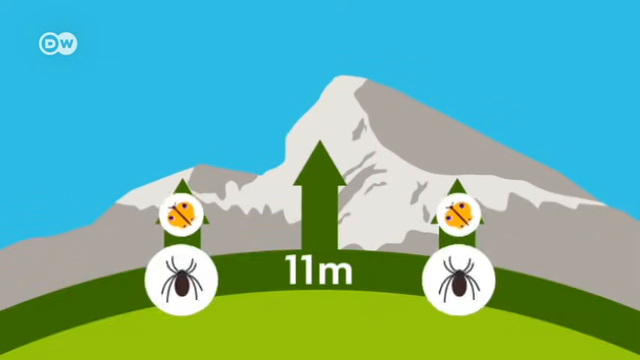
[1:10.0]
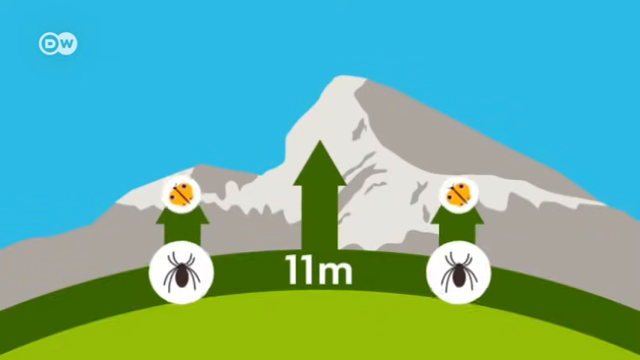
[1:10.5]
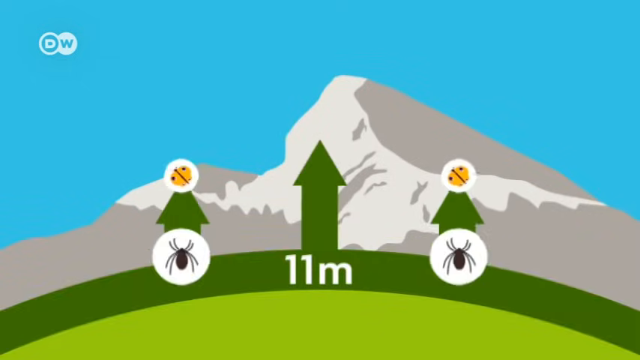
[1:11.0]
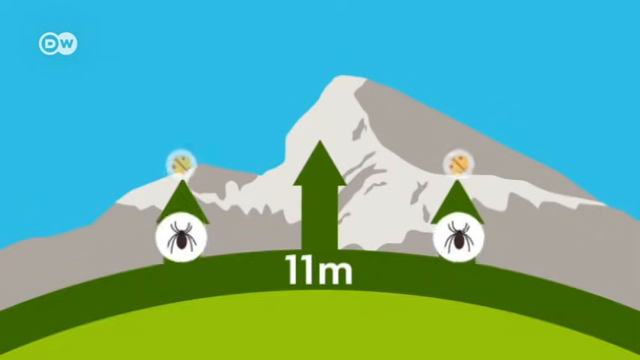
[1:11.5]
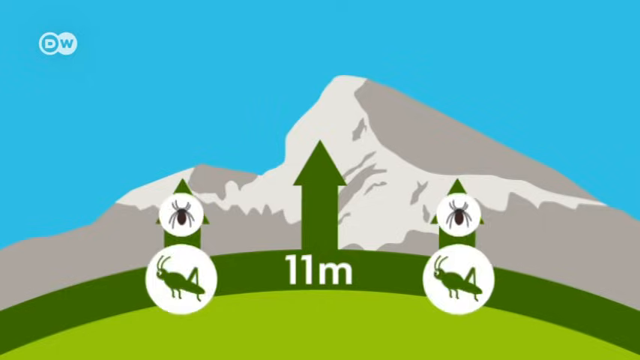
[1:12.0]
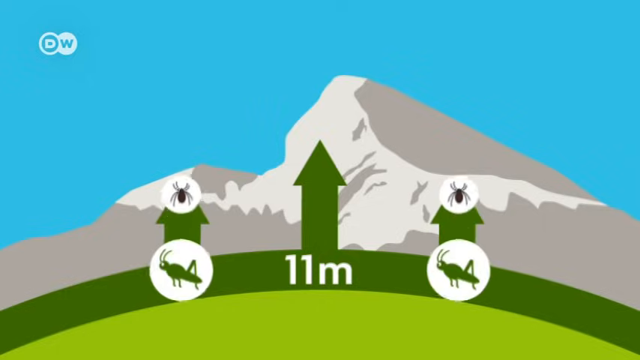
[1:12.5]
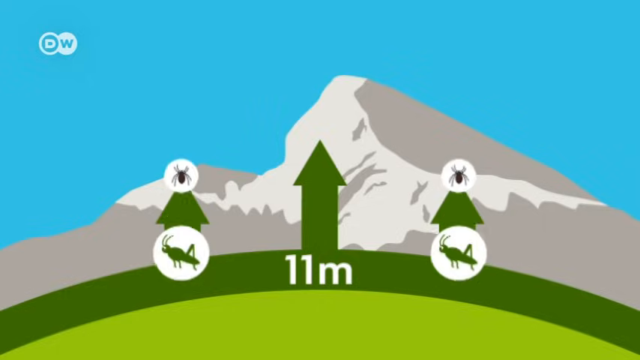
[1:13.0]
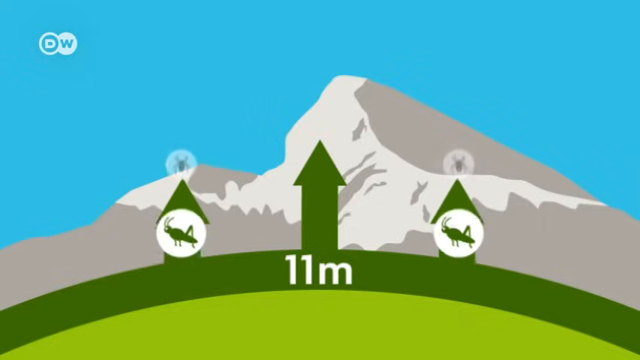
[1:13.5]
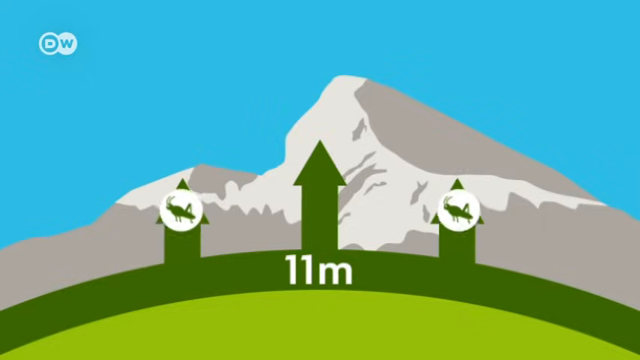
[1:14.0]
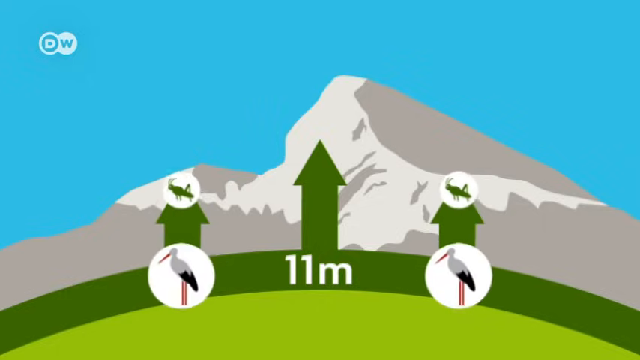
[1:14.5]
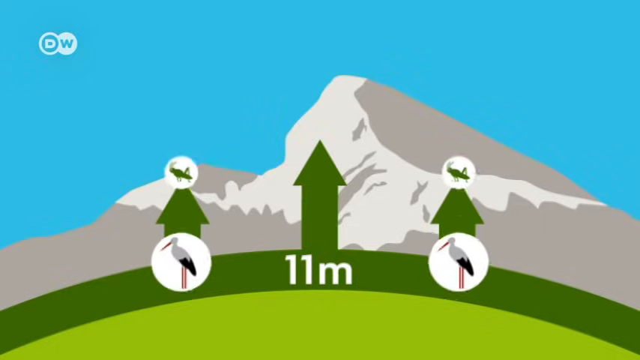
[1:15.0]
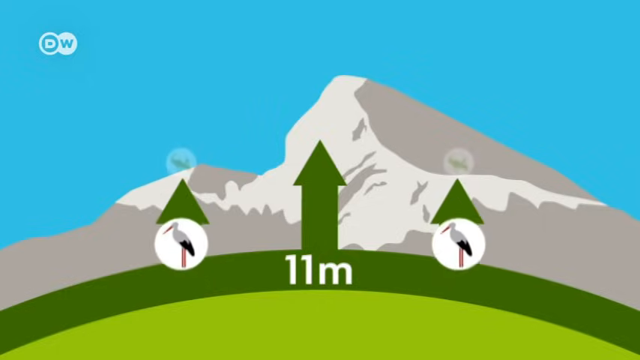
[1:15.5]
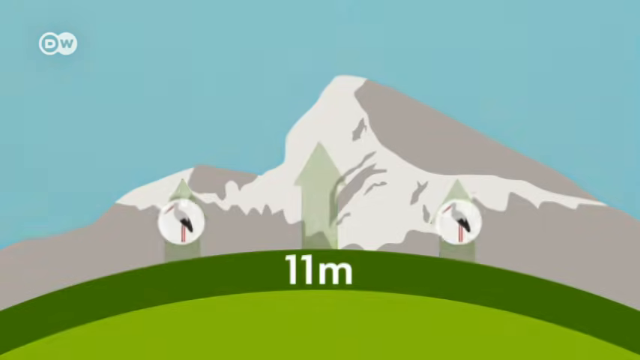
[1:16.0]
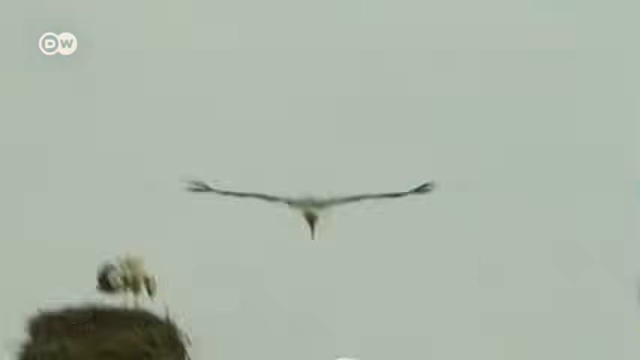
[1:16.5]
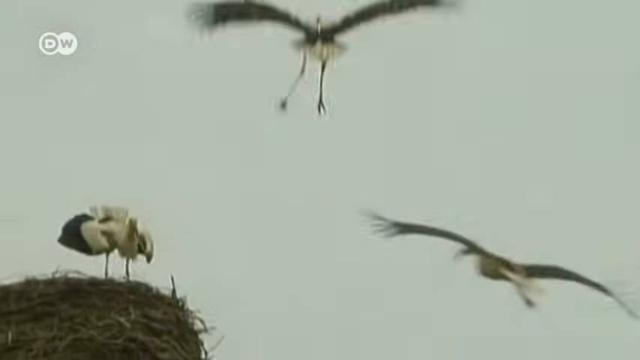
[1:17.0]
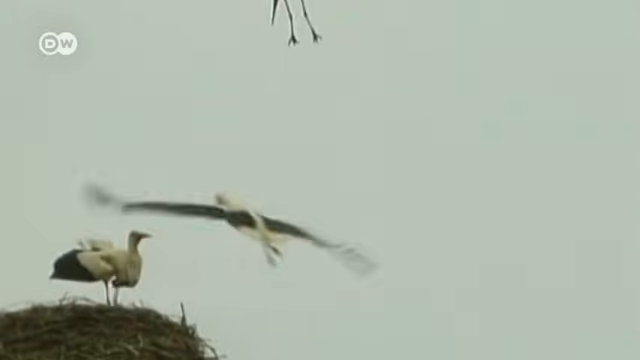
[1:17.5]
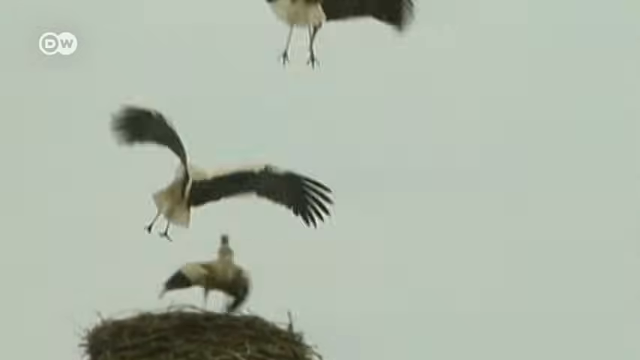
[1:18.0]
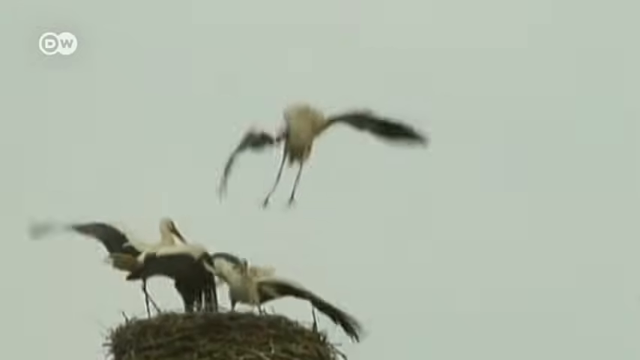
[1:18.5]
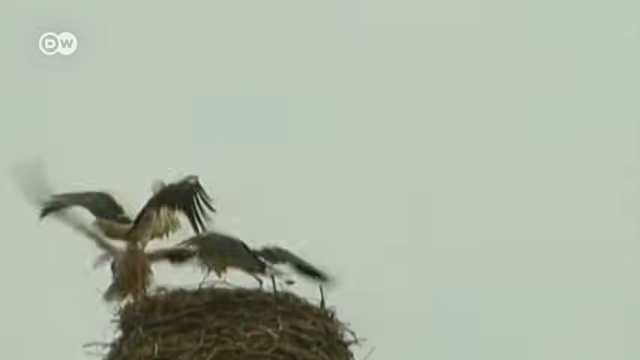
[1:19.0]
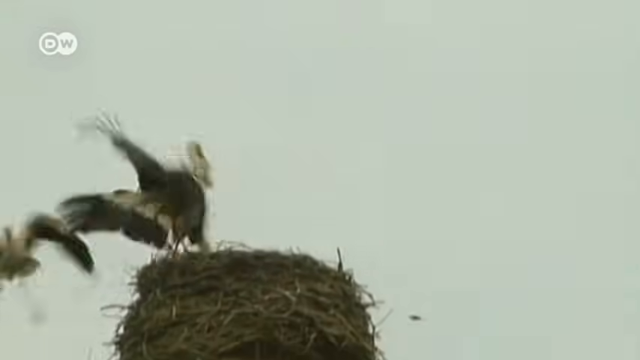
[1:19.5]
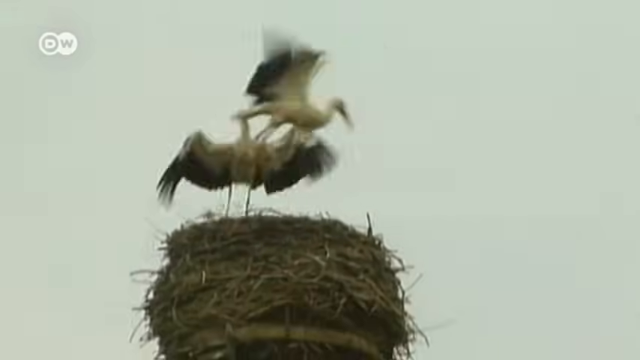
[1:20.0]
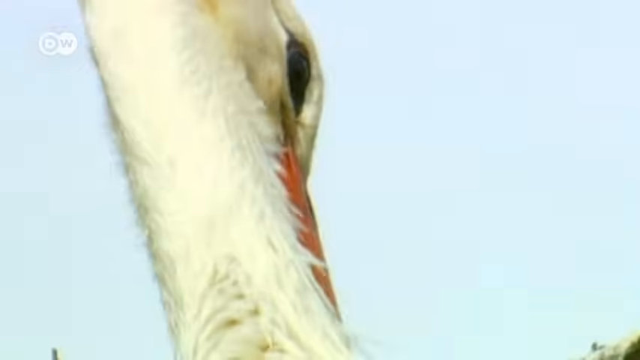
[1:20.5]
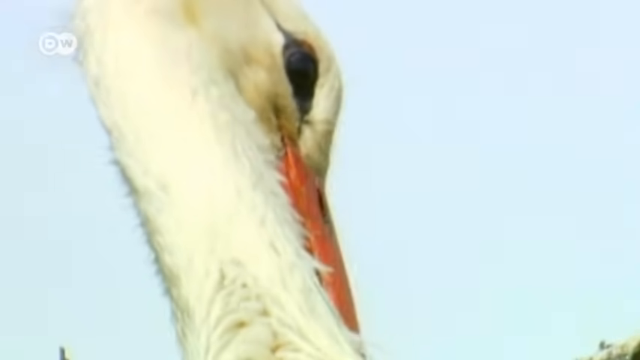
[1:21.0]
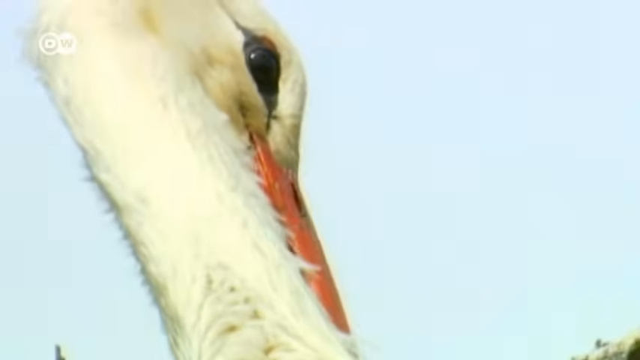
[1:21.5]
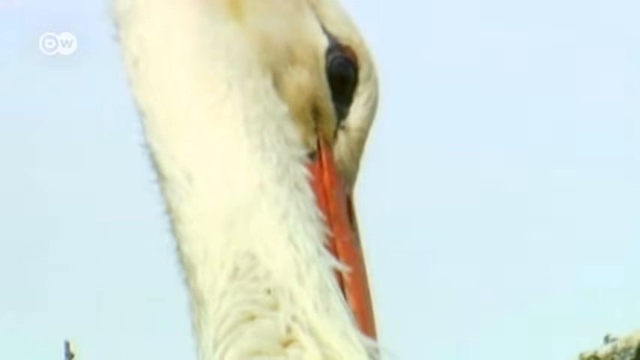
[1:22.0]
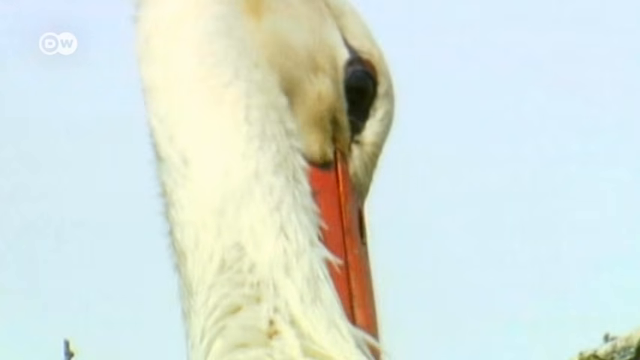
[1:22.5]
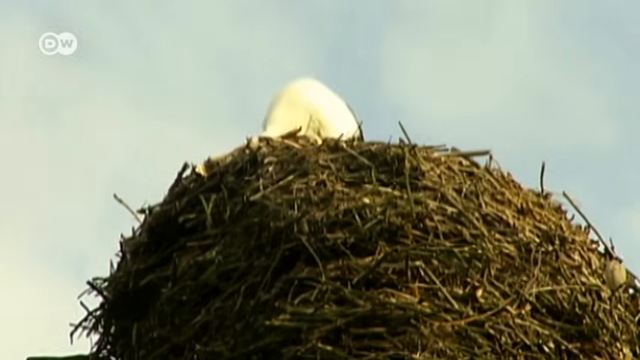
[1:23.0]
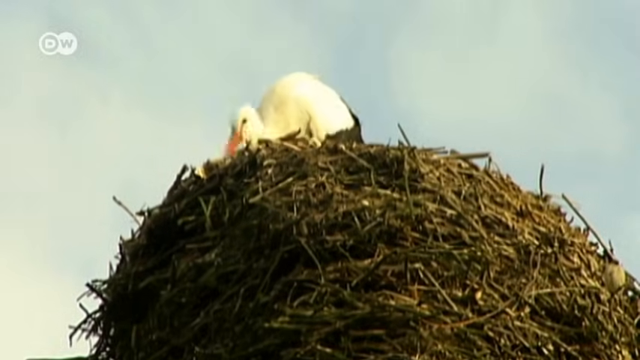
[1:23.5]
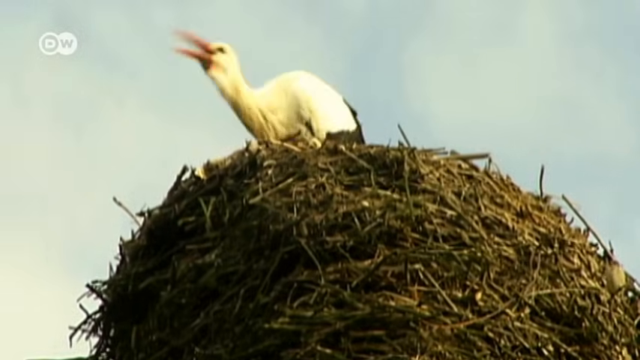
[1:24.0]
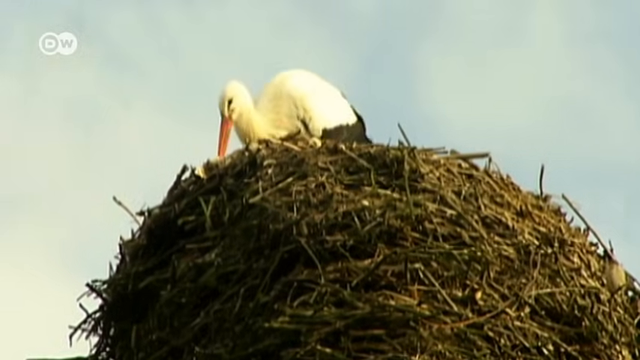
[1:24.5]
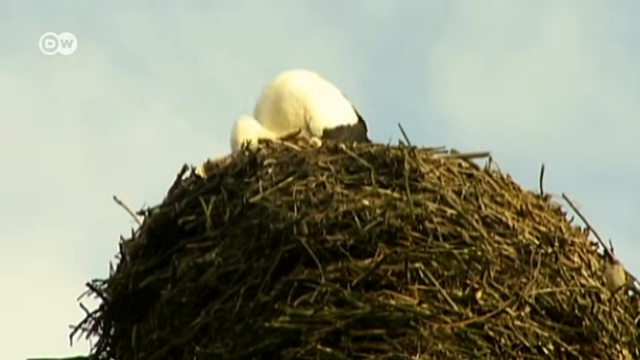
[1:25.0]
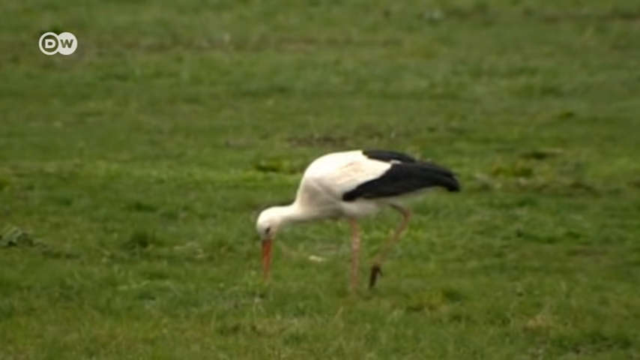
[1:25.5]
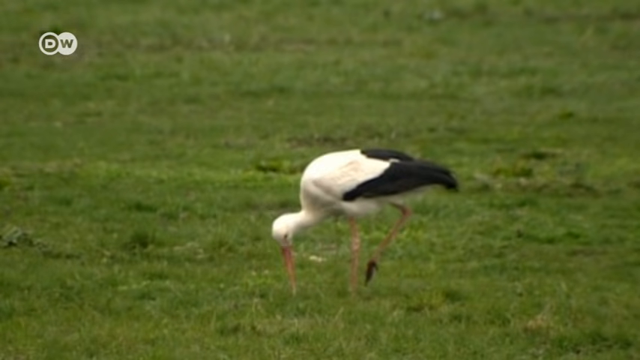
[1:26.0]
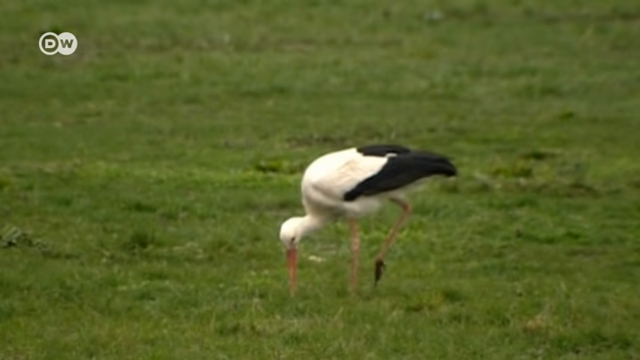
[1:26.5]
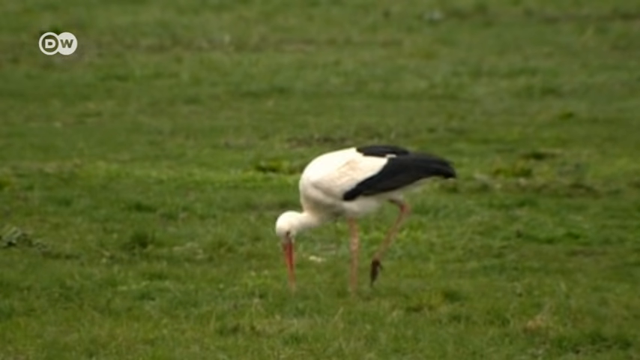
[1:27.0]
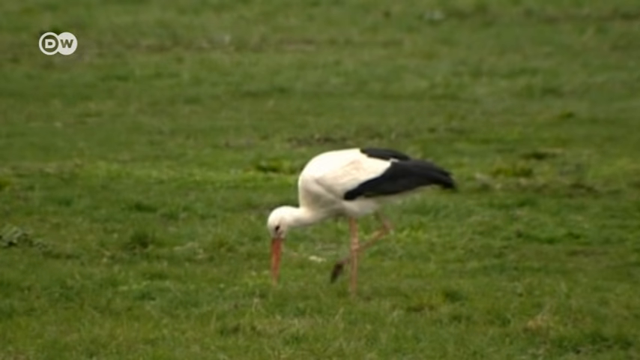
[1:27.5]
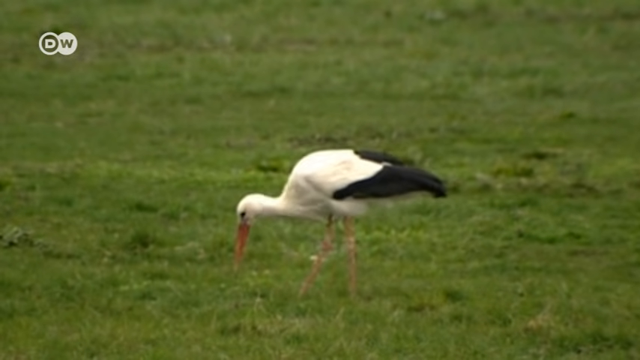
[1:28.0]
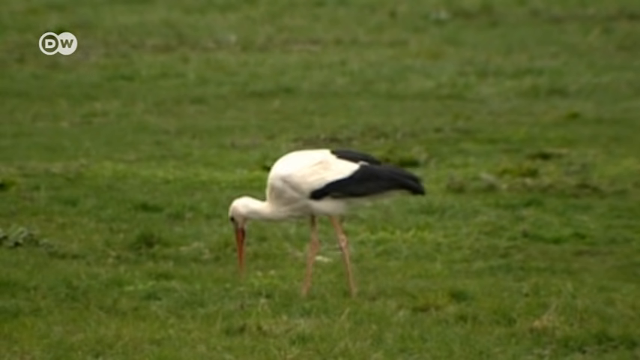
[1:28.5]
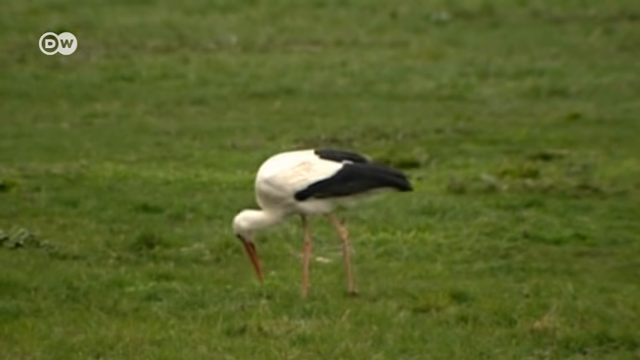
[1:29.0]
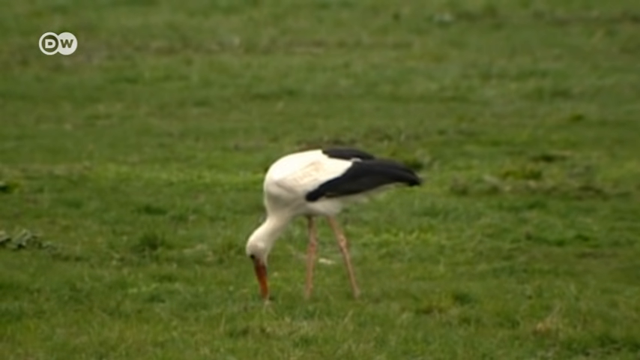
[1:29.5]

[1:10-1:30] The grassland with the snowy mountain in the background and the two butterfly symbols is shown. Two green arrows appear, pushing upwards, and the butterfly symbols move upwards with them. Two spider symbols appear beneath the butterflies and also move upwards, as do grasshopper symbols and then bird symbols. The words "11 meter" appear in the middle. Next is realistic footage of black and white birds flying up high and then landing on top of a tree. A zoomed-in shot shows a bird grooming itself, followed by a bird feeding its chicks in its nest, and then a bird walking along and trying to find food on green grassland. The scene quickly moves to a rather yellow grassland area, where two similar birds are still trying to find food, perhaps with less luck.